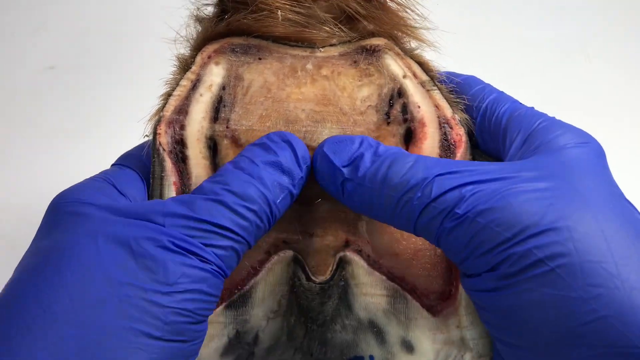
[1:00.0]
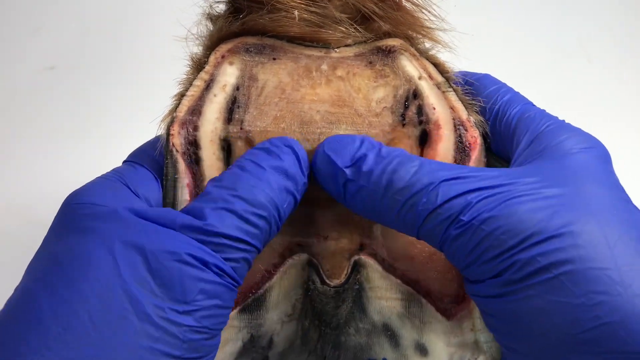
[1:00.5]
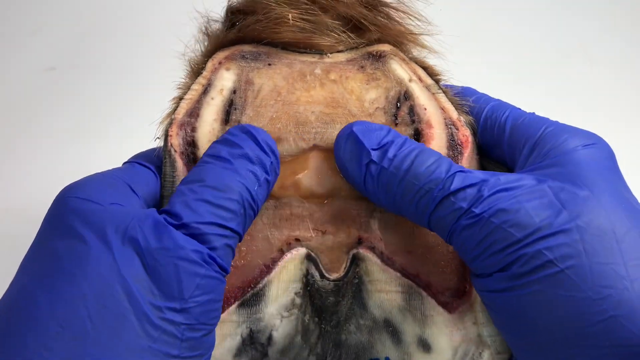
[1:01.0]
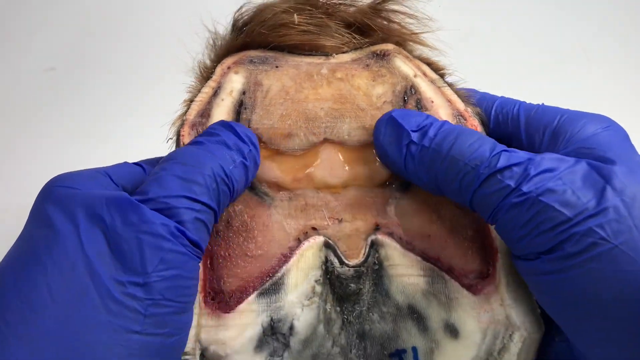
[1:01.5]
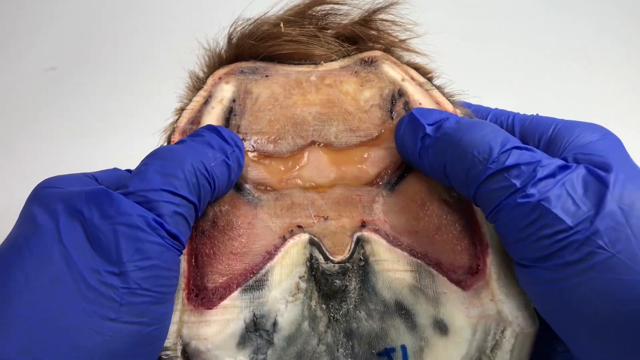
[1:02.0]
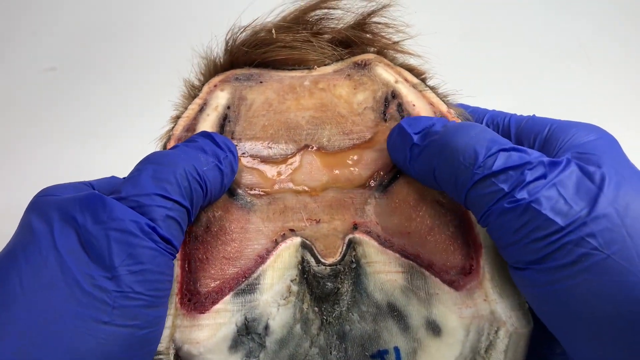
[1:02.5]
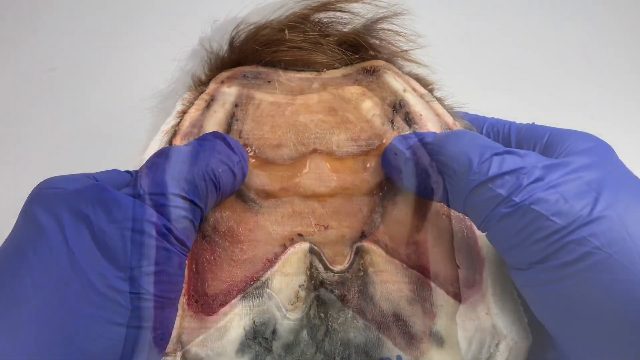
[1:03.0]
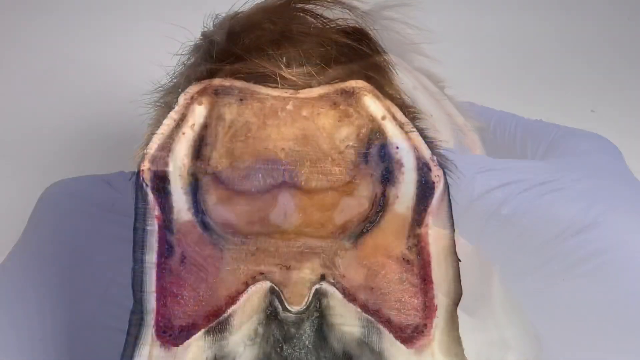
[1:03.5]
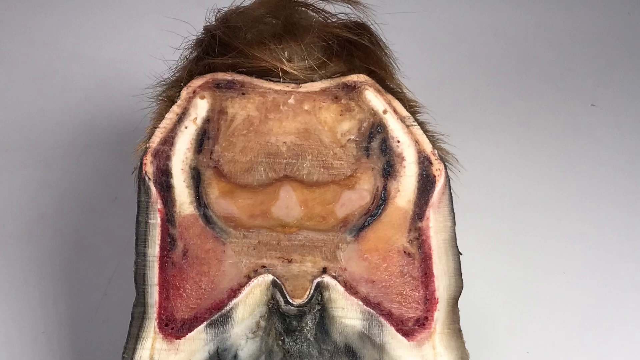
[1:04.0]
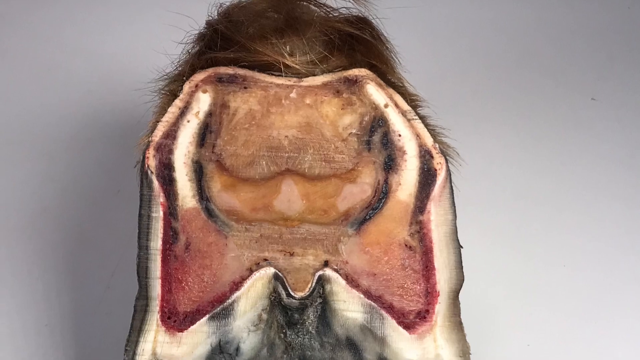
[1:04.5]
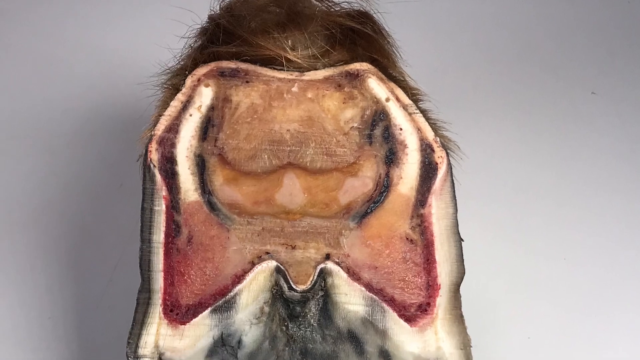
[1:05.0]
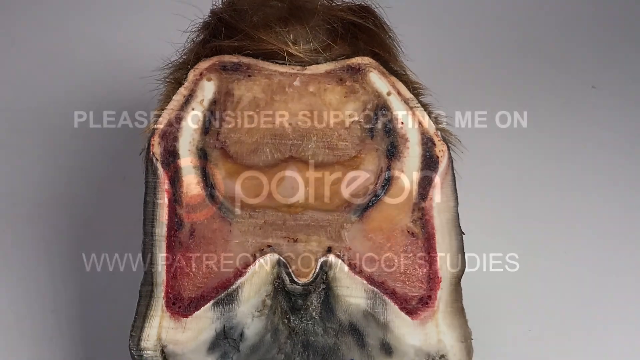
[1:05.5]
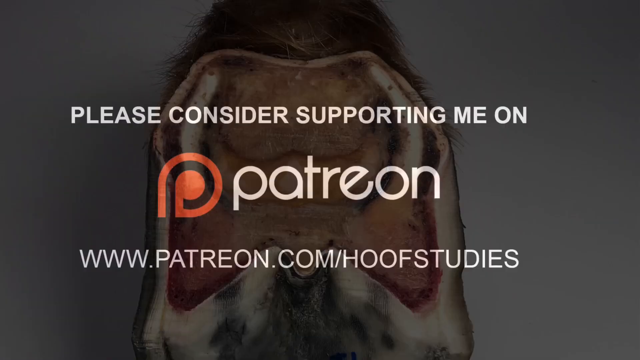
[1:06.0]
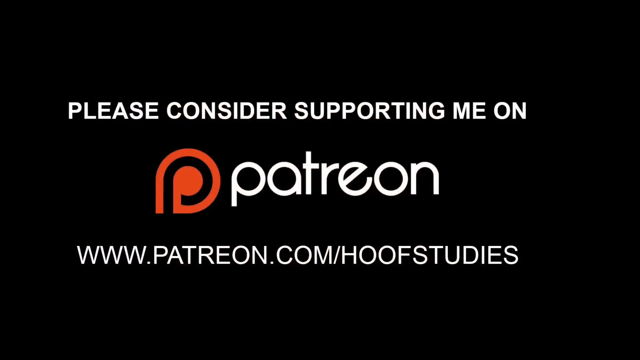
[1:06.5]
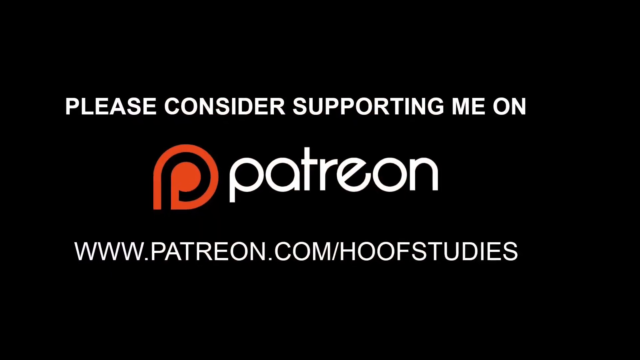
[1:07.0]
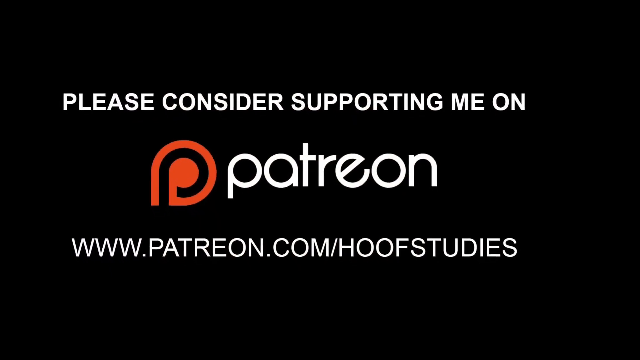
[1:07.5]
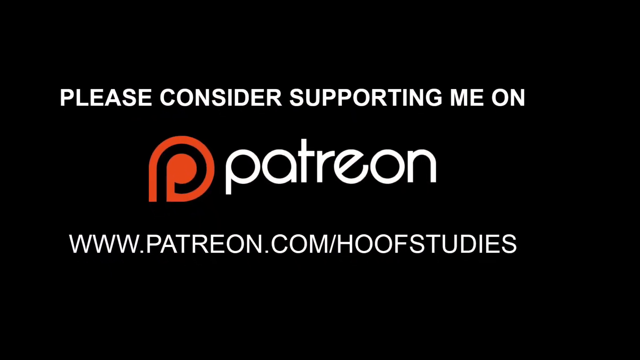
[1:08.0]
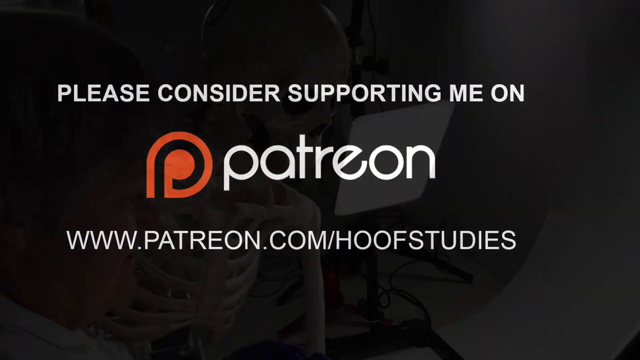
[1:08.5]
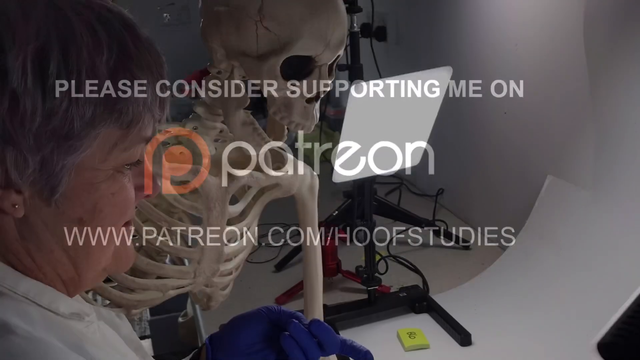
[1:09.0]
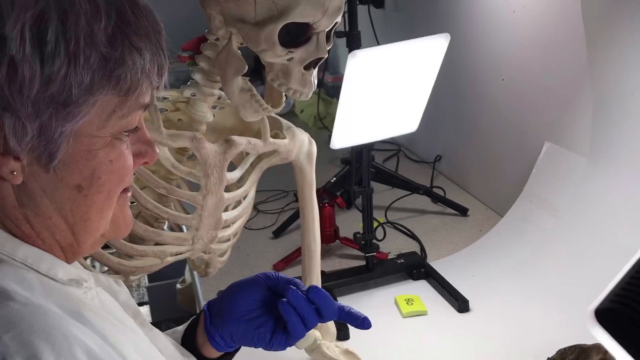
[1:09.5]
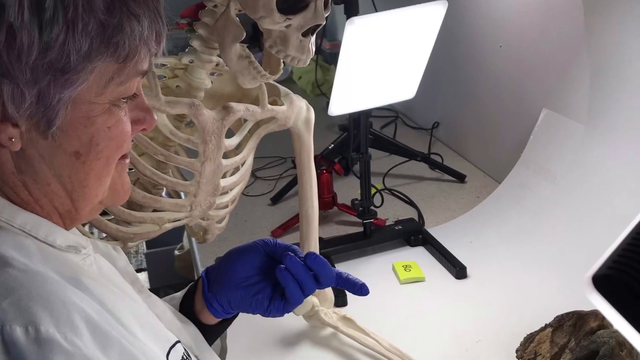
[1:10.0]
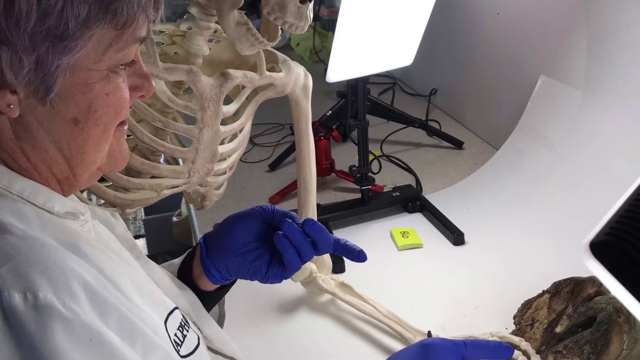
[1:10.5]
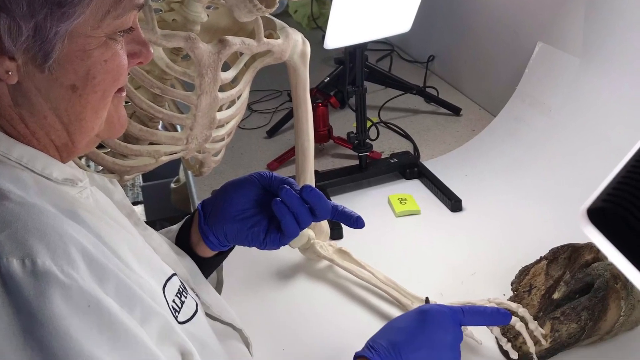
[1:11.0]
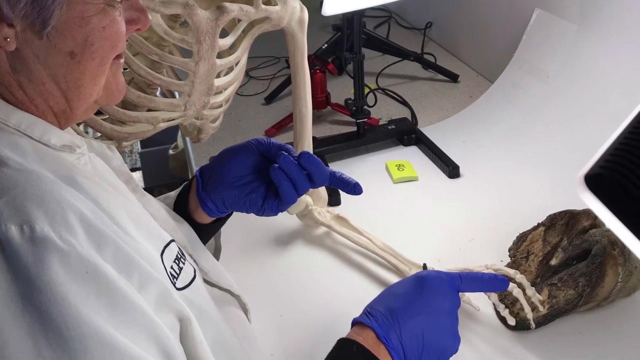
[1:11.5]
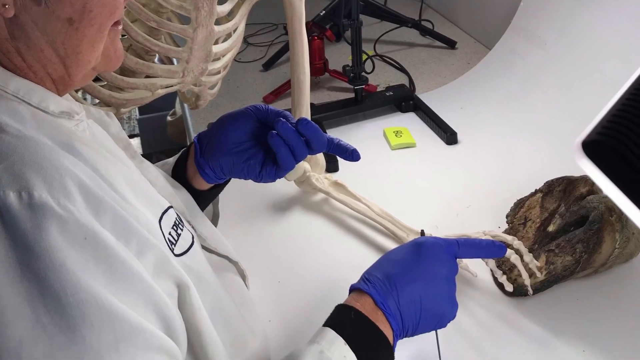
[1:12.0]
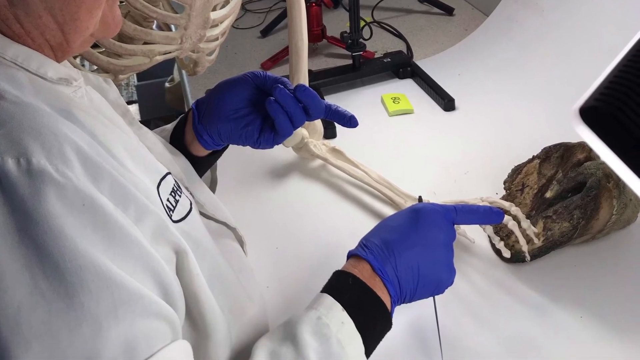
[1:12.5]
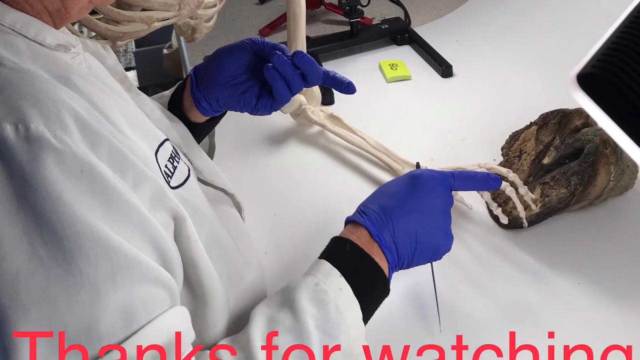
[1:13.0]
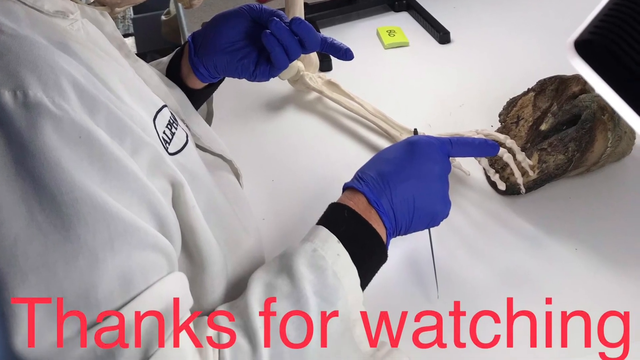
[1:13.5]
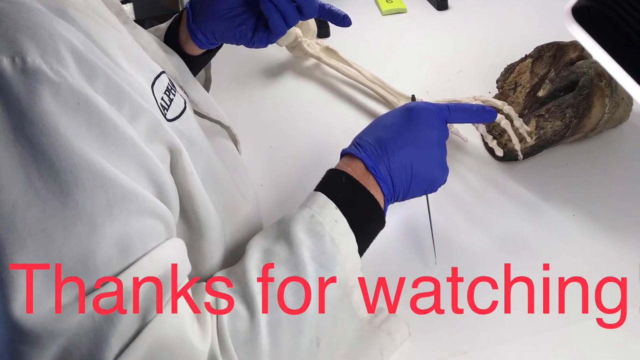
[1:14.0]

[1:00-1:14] The person touches and presses on the horse hoof, possibly to get an idea of how hard or soft it is. It appears to be a dissected hoof, with some pink, what looks like bone and possibly bone marrow, and tan fur. They feel it, and at one point it looks moist, almost wet. The video fades to black and white text reads "please consider supporting me on Patreon, www.patreon.com/hoof studies," with the Patreon logo in a kind of orange color. At the end, someone dressed in a white lab coat appears with a human skeleton; the camera pans down to the person in blue gloves, and the text "thanks for watching" appears.